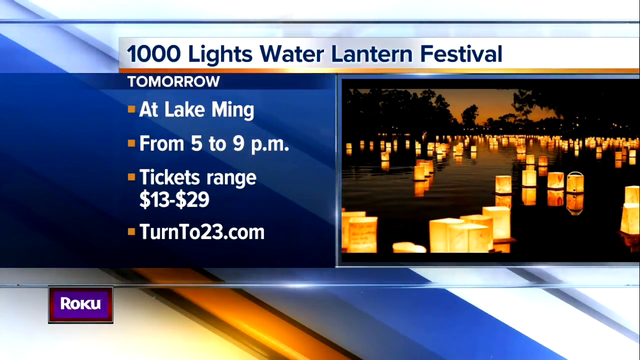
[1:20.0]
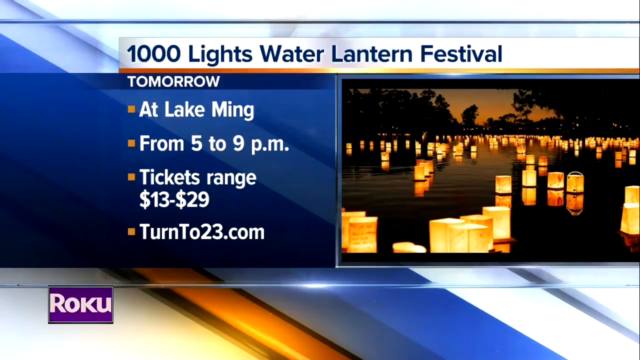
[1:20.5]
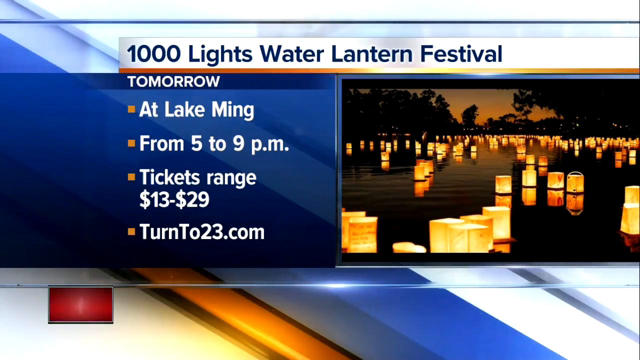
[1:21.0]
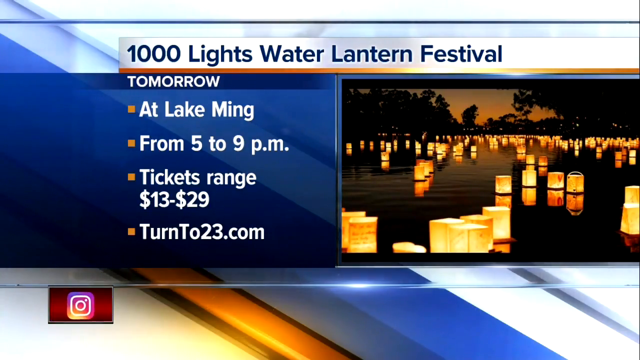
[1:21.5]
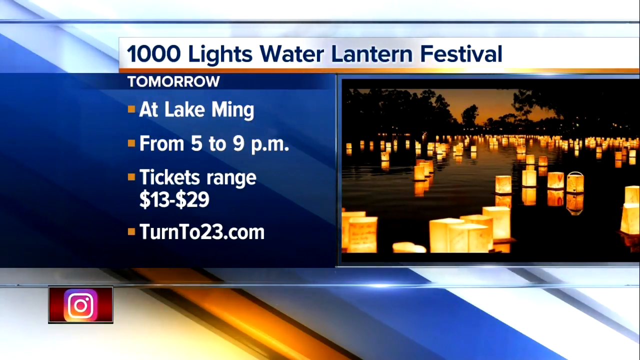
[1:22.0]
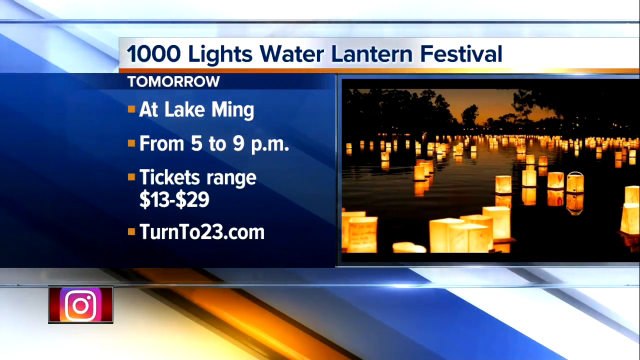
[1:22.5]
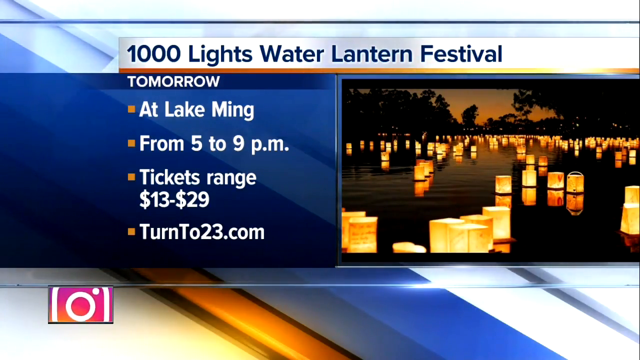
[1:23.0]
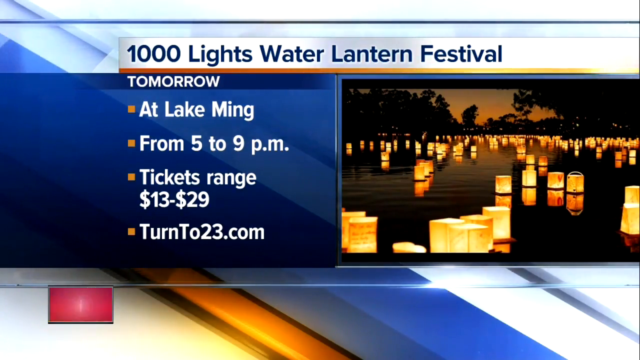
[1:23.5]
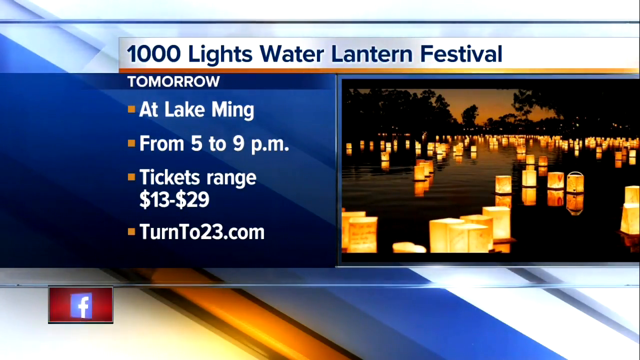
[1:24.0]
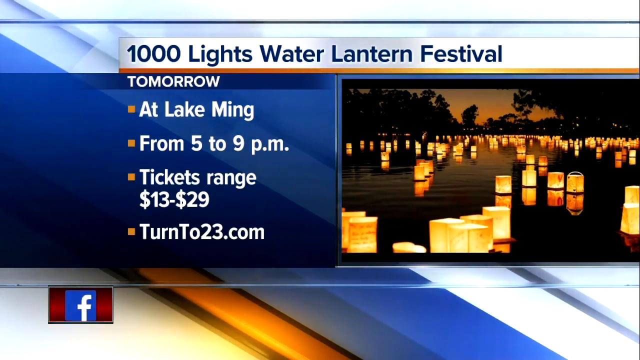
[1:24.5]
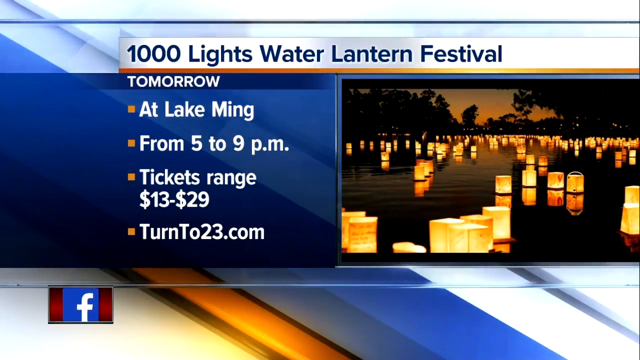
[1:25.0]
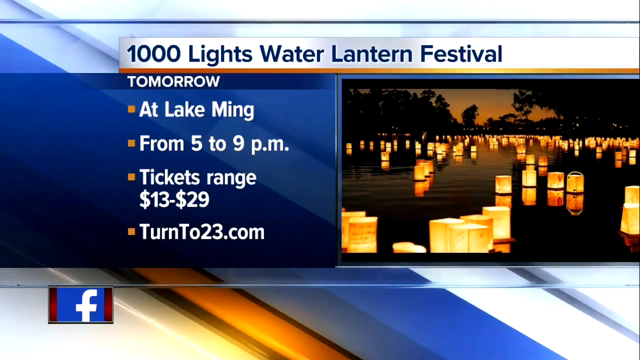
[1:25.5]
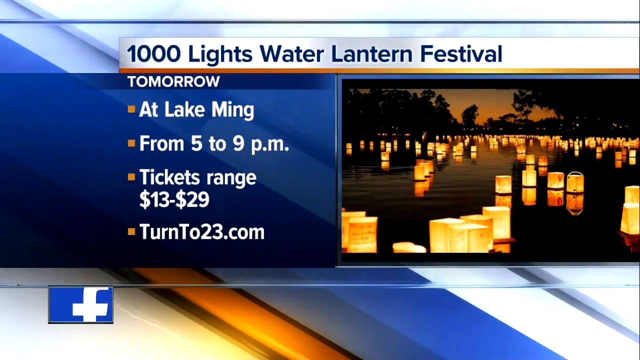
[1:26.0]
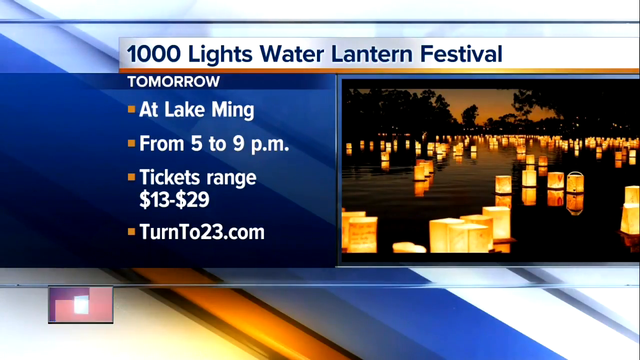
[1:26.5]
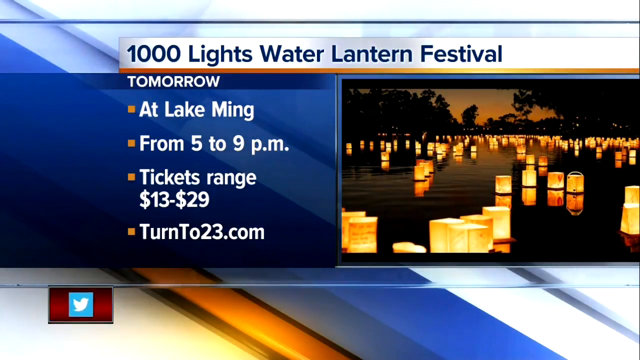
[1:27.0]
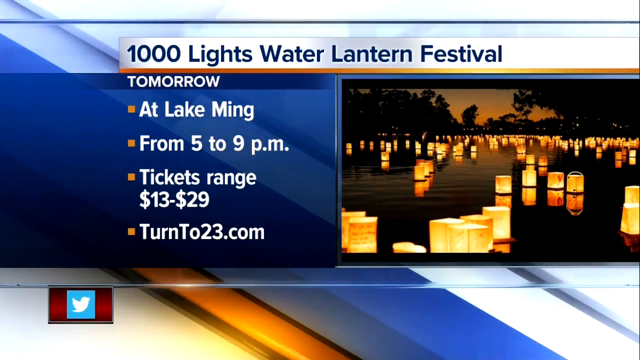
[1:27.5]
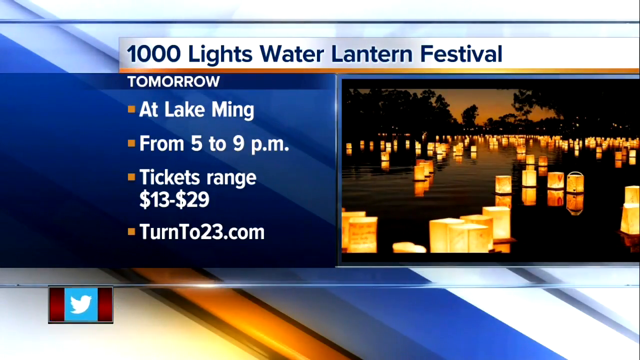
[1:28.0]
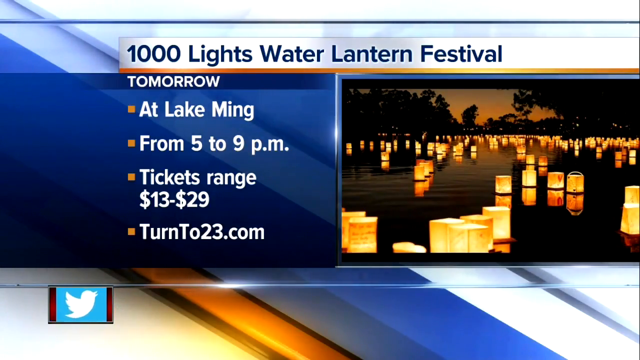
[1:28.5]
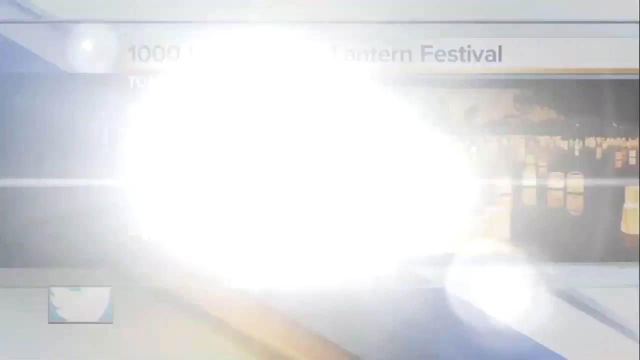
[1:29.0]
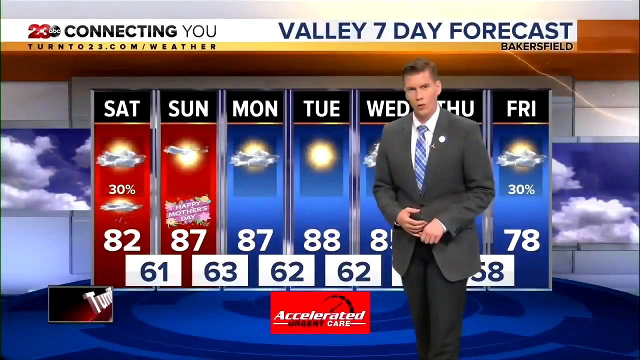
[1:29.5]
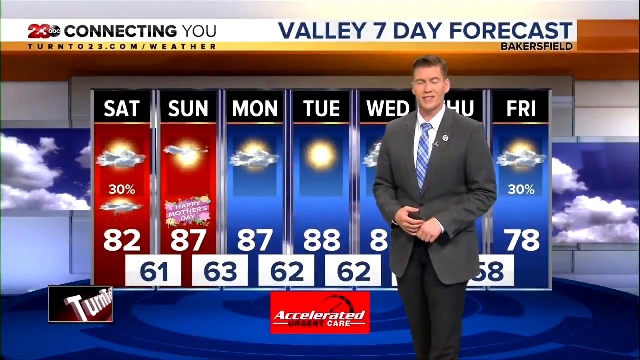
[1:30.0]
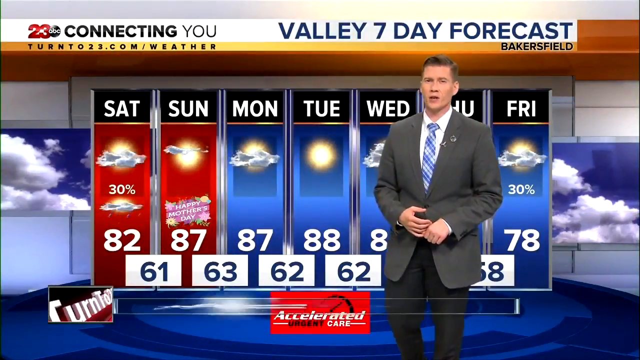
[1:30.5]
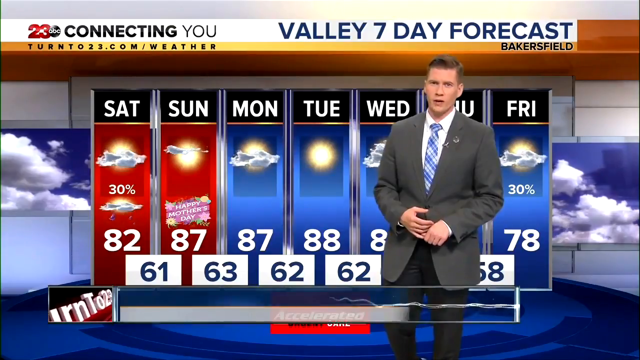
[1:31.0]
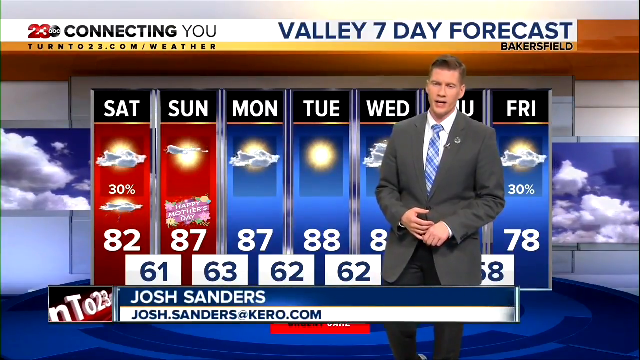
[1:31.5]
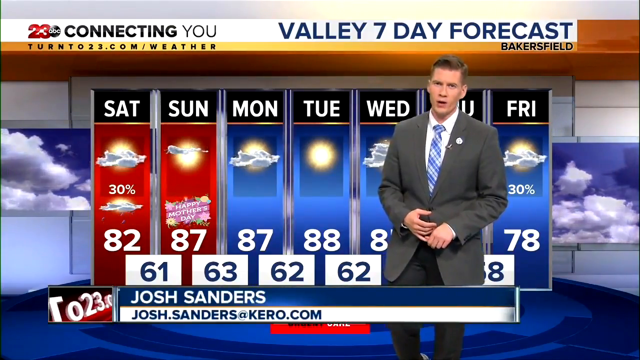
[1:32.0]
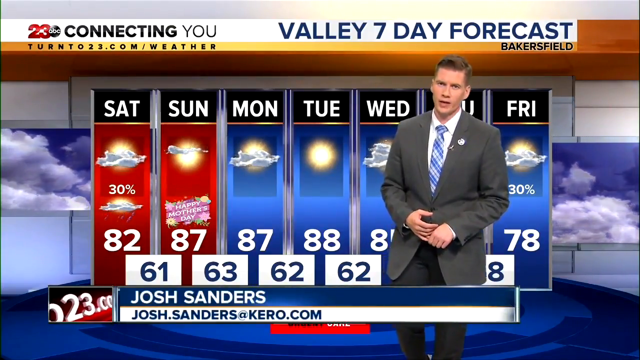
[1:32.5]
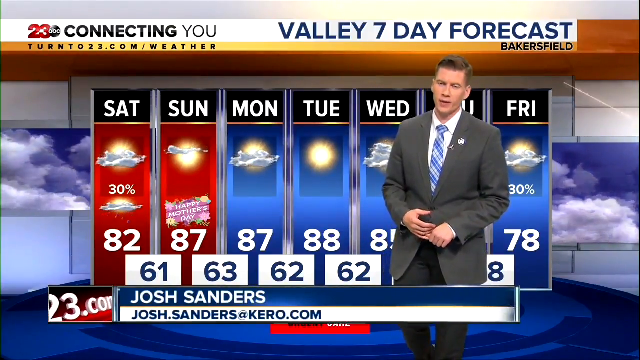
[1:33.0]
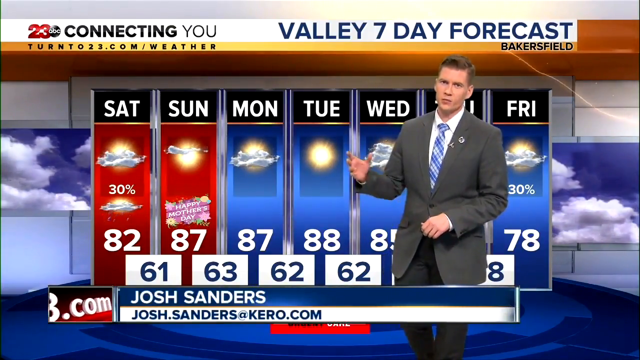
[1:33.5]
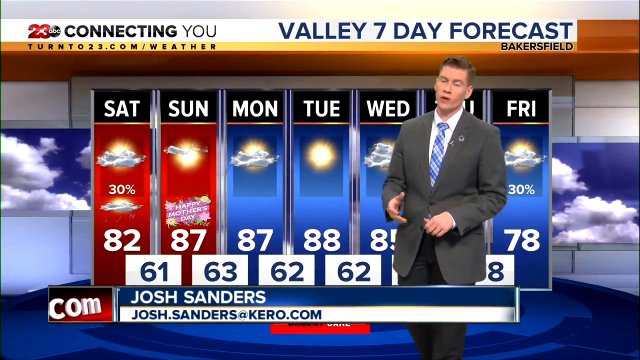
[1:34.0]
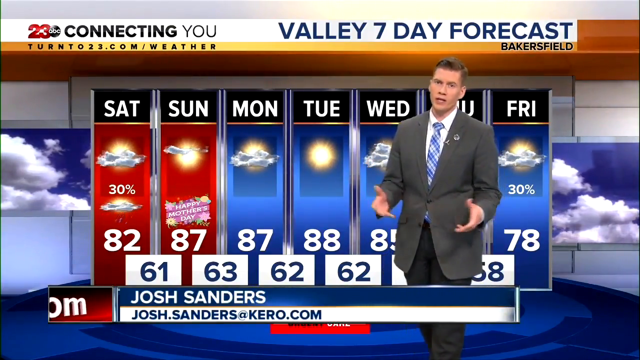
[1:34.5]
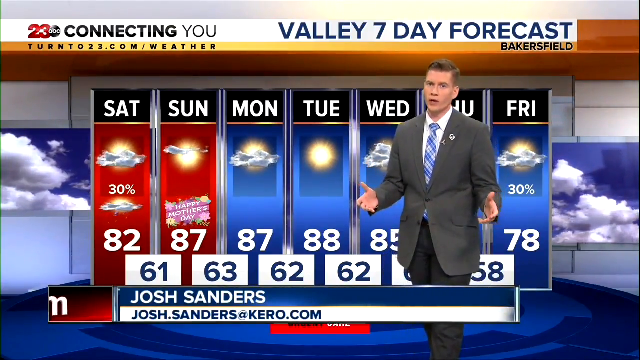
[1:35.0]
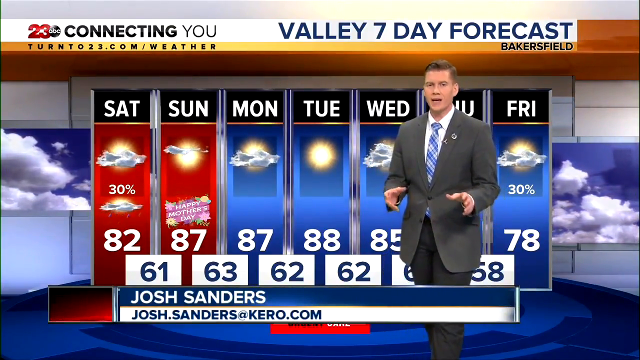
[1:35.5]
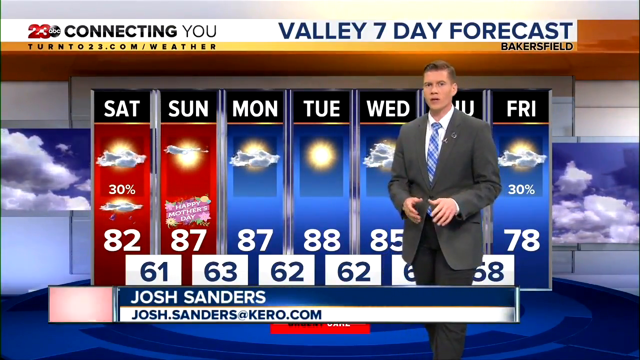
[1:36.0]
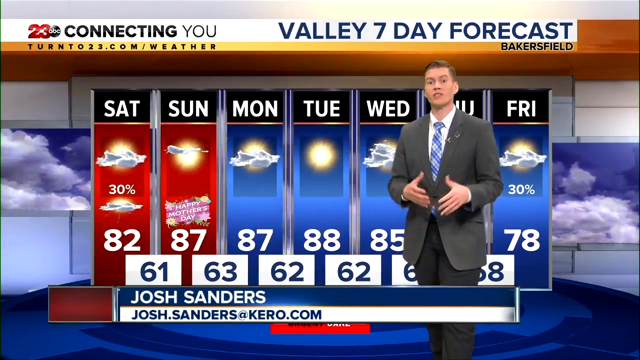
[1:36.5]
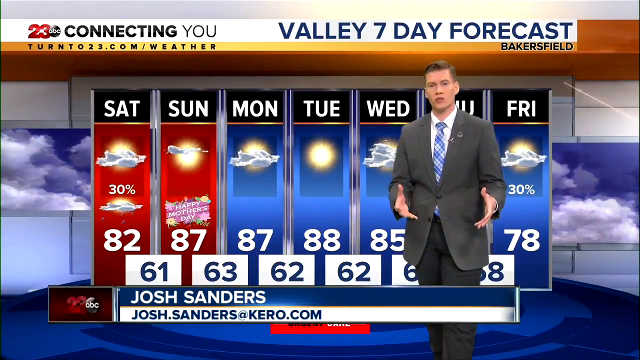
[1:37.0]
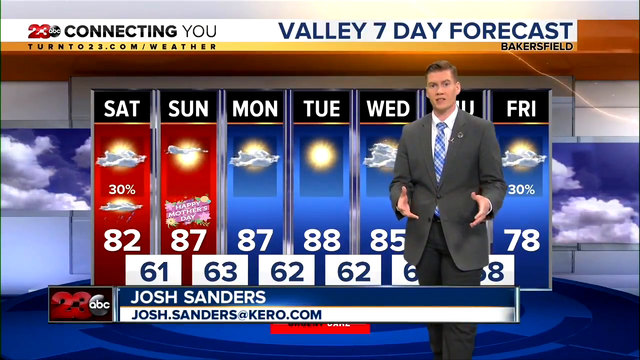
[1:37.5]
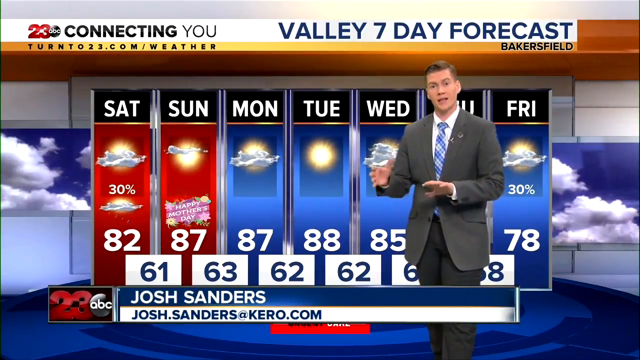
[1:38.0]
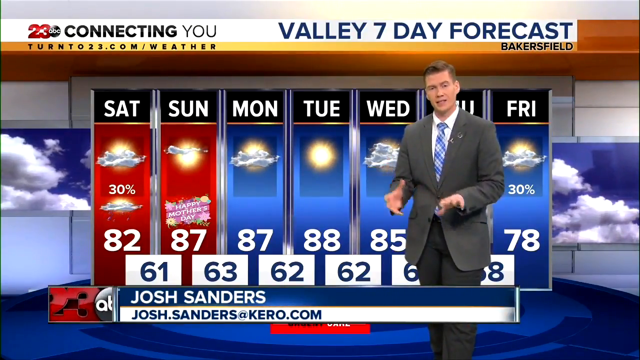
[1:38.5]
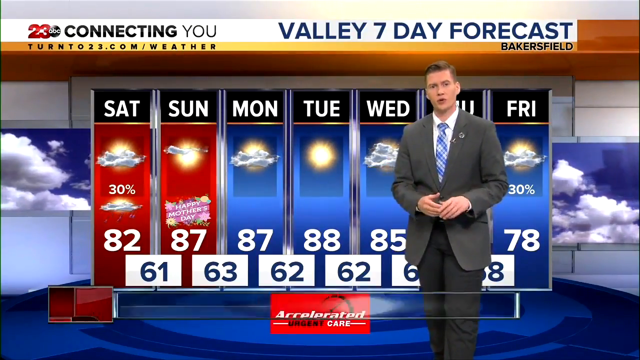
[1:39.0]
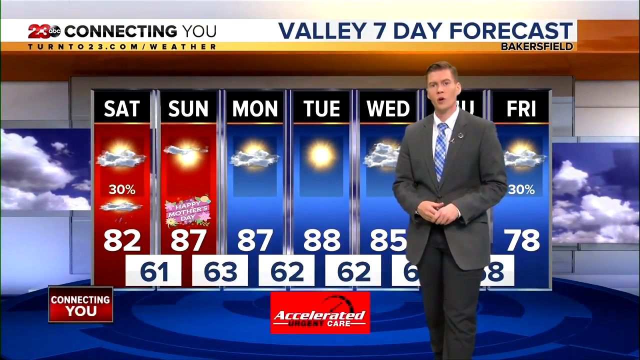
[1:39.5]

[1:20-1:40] The newscast continues from the 1000 Lights Water Lantern Festival at Lake Ming, held tomorrow from 5 to 9 PM with tickets from $13 to $29, sponsored by TurnTo23.com according to the newscast. The weather follows: temperatures in the low to high 80s, 78 degrees on Saturday, and morning lows in the 60s.